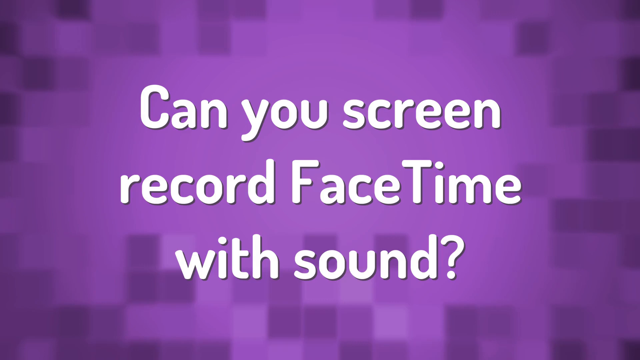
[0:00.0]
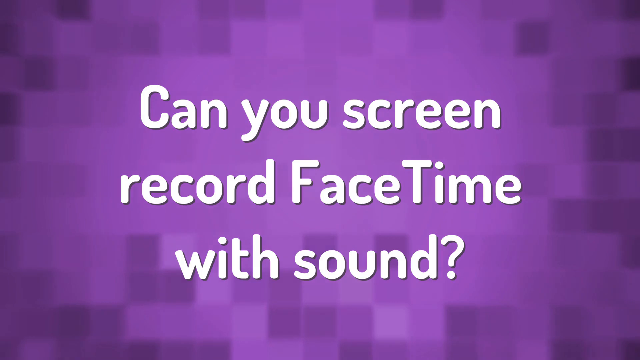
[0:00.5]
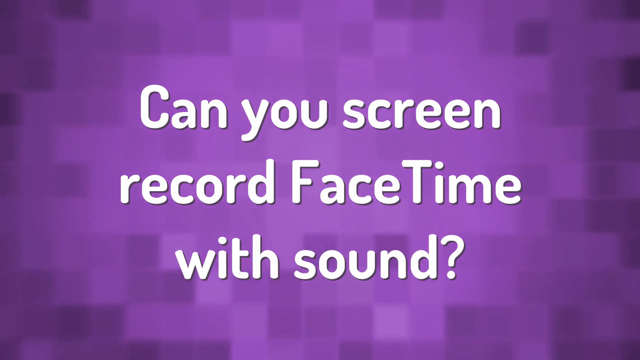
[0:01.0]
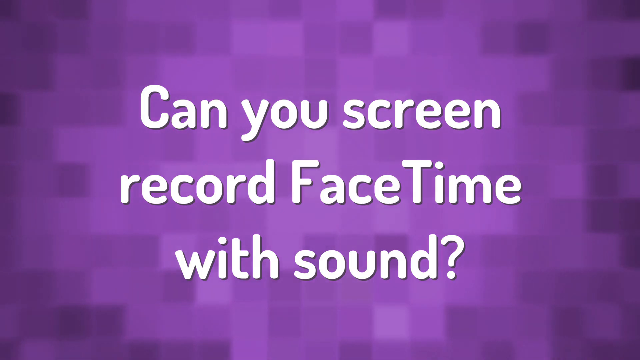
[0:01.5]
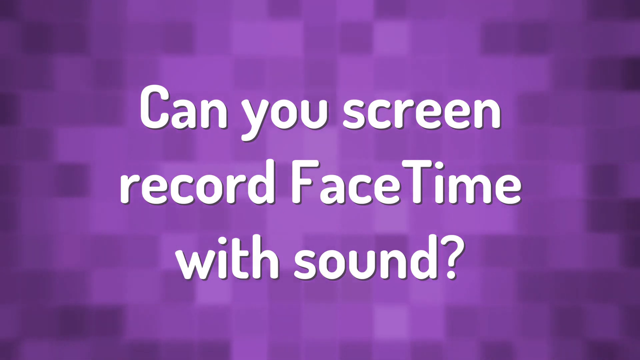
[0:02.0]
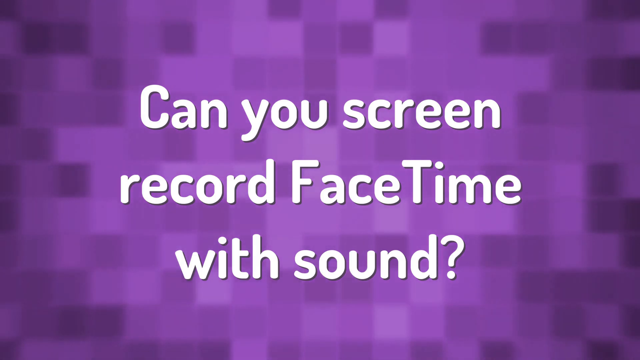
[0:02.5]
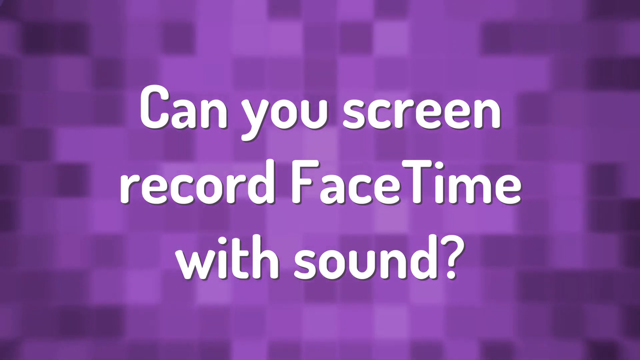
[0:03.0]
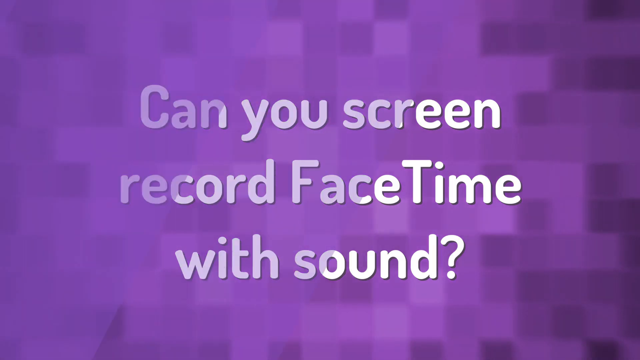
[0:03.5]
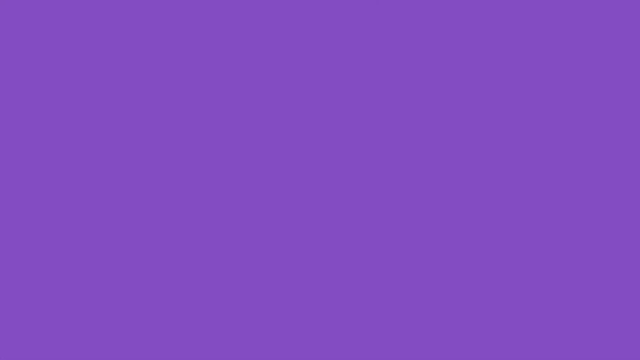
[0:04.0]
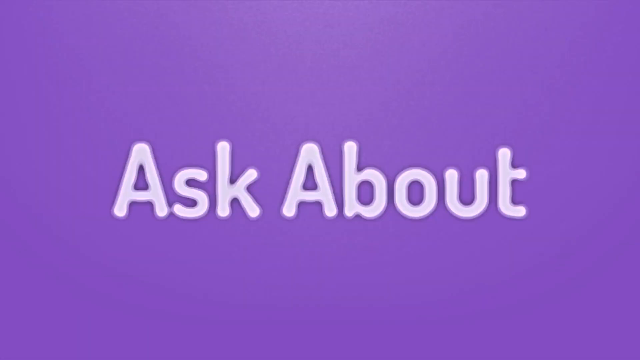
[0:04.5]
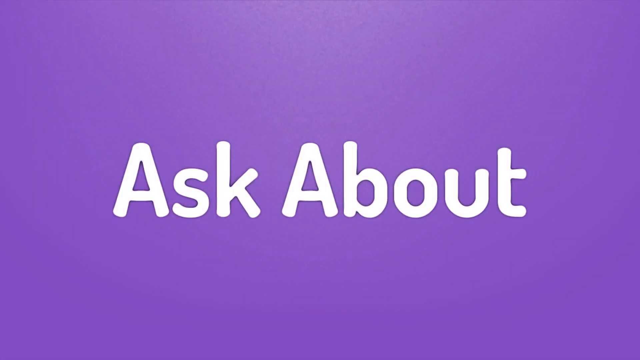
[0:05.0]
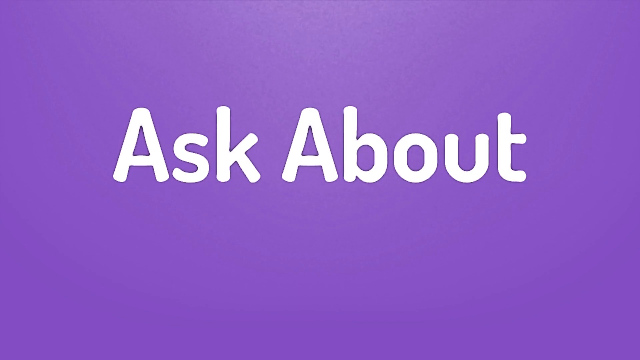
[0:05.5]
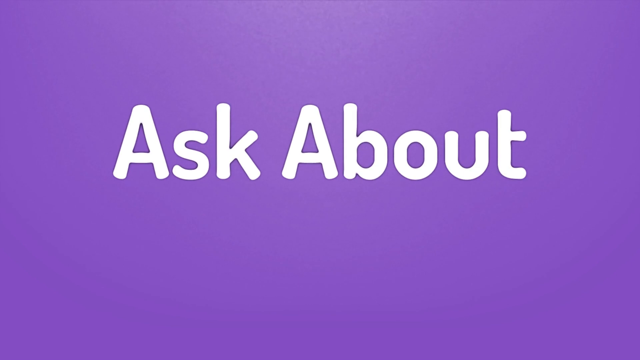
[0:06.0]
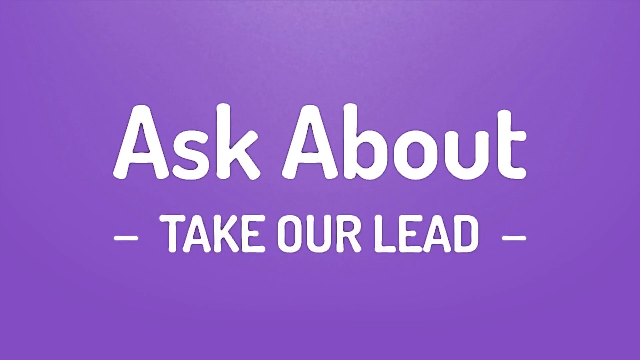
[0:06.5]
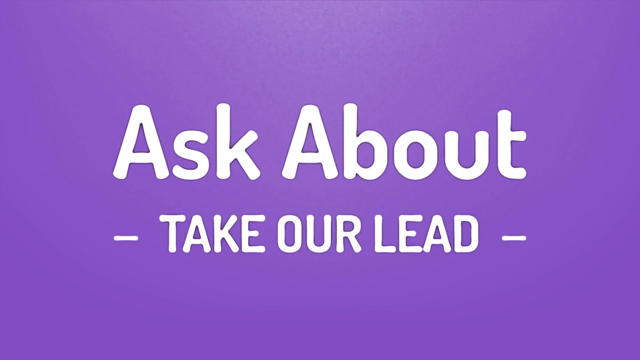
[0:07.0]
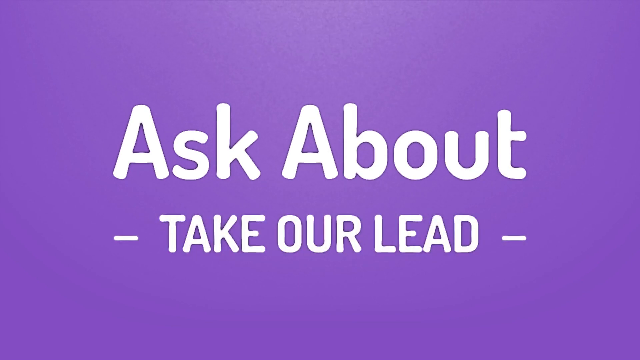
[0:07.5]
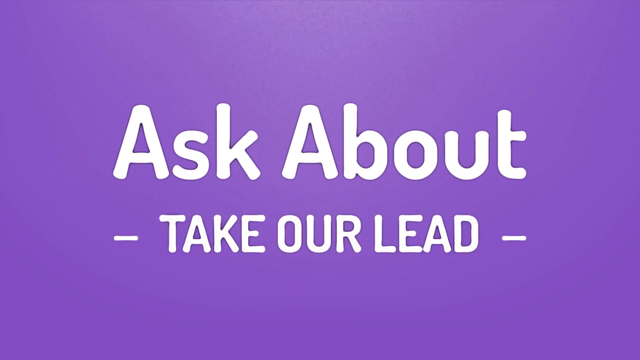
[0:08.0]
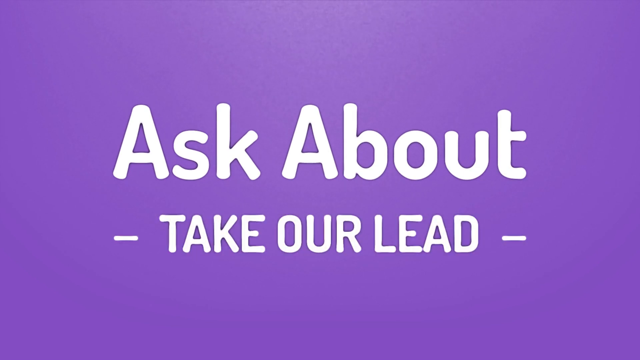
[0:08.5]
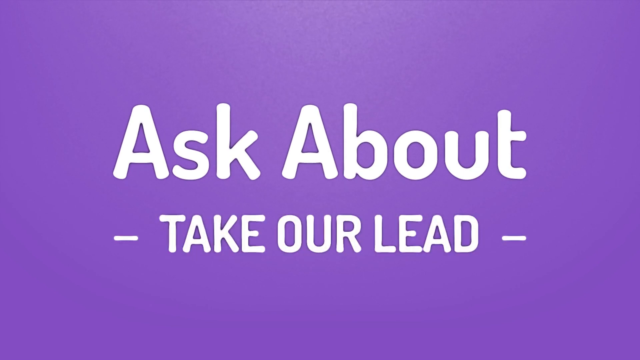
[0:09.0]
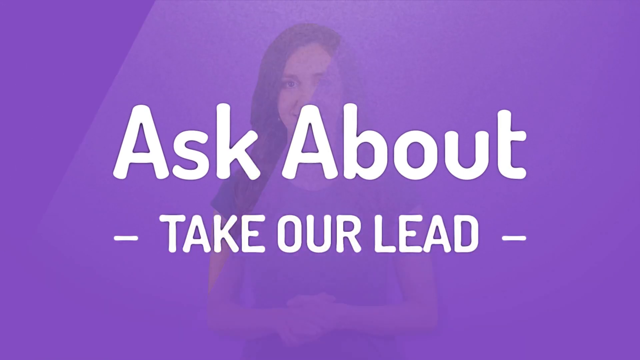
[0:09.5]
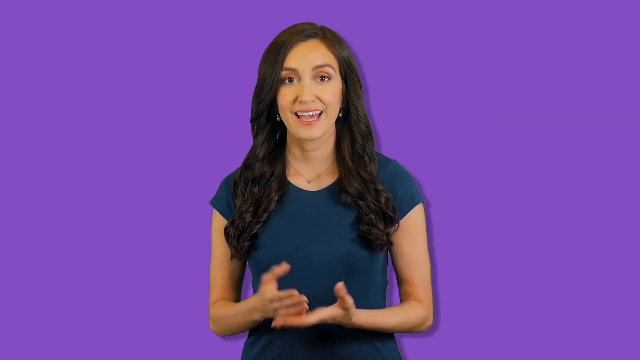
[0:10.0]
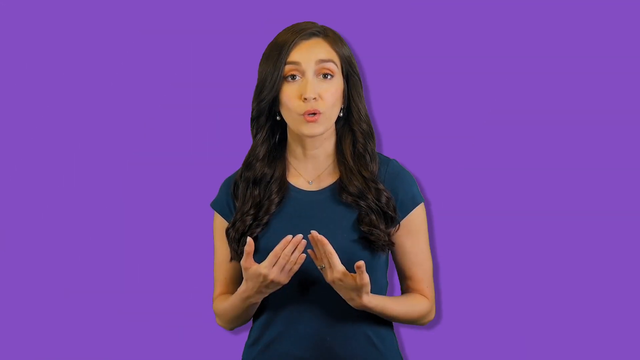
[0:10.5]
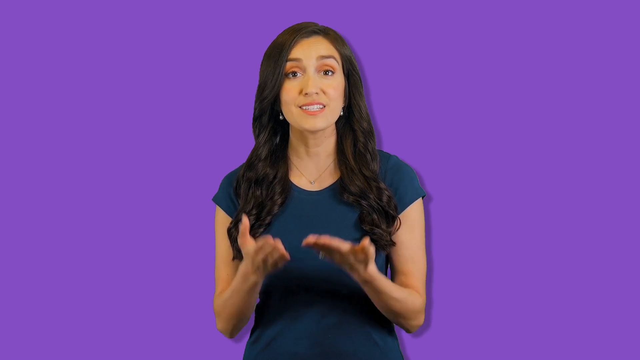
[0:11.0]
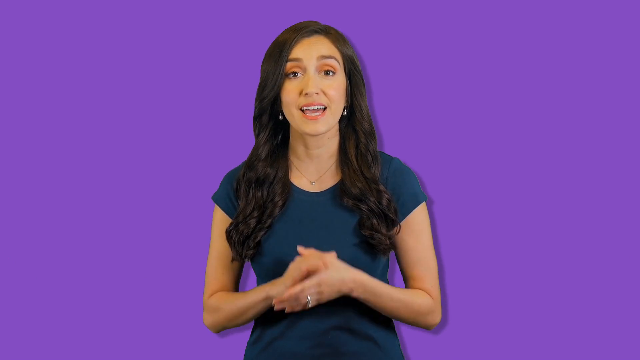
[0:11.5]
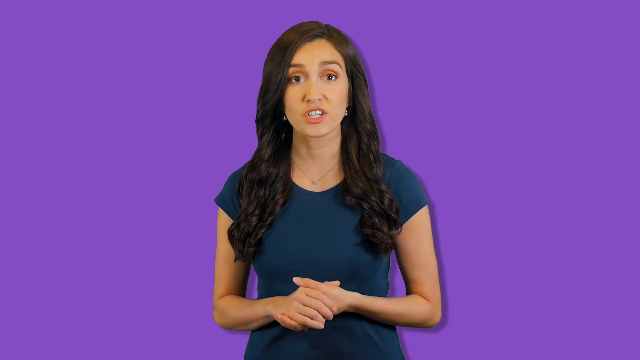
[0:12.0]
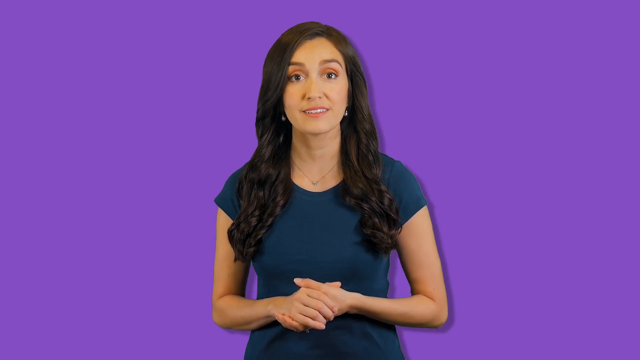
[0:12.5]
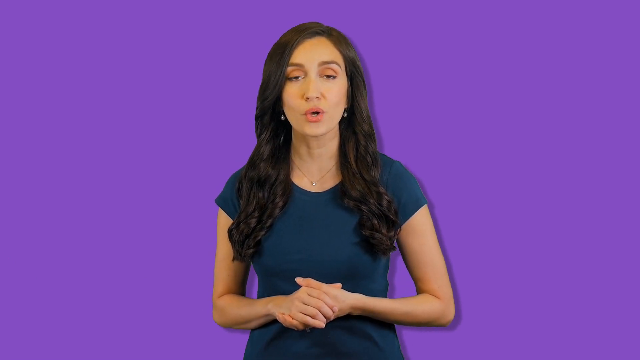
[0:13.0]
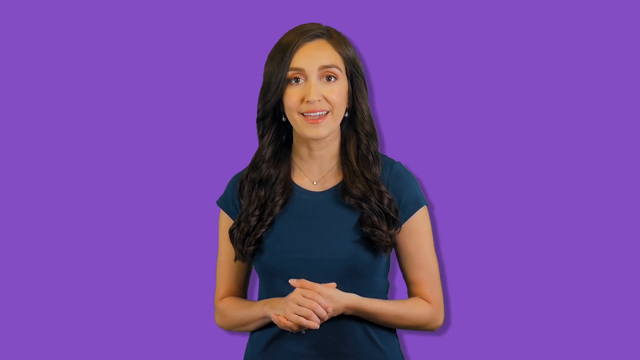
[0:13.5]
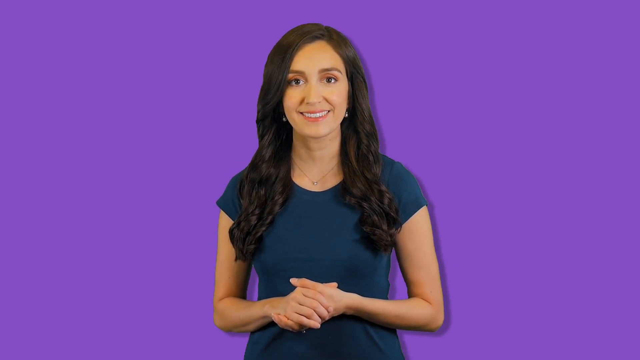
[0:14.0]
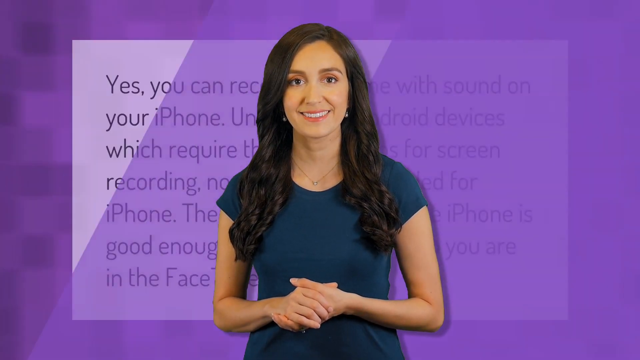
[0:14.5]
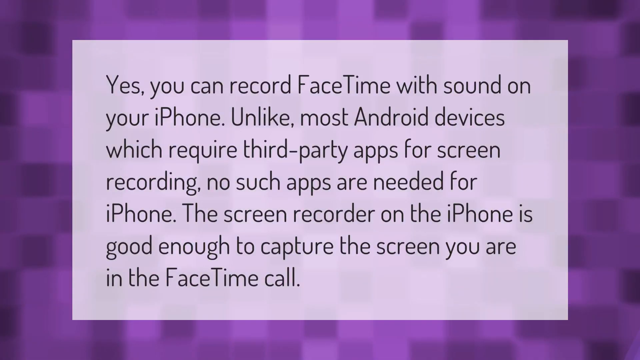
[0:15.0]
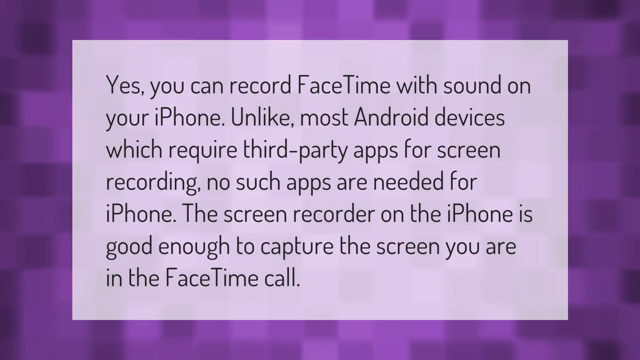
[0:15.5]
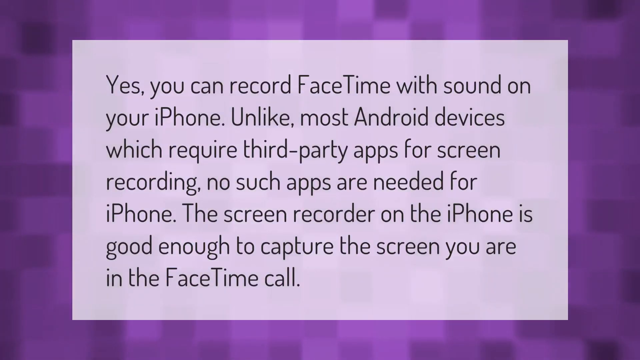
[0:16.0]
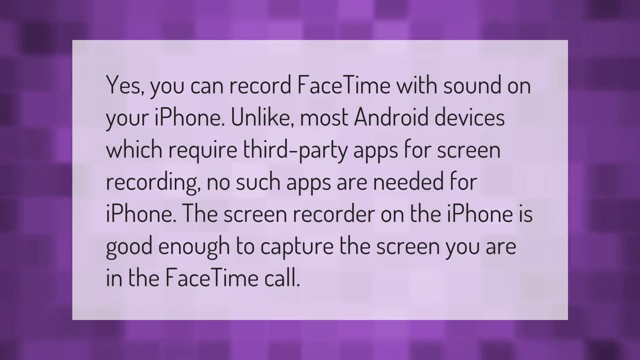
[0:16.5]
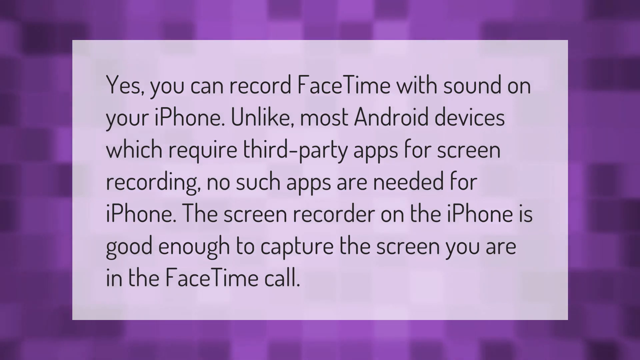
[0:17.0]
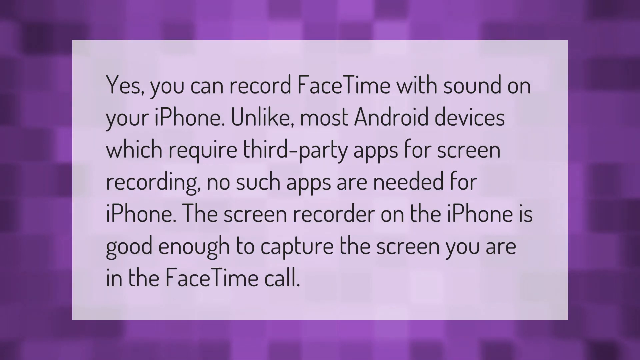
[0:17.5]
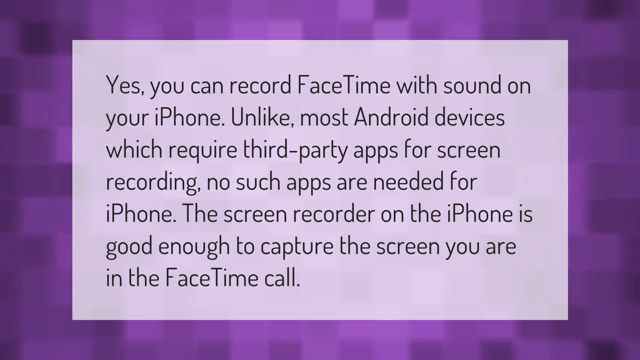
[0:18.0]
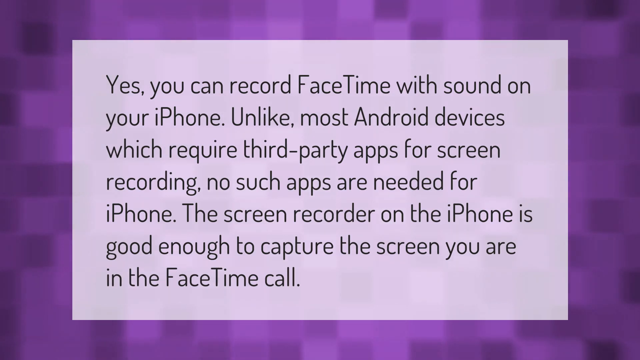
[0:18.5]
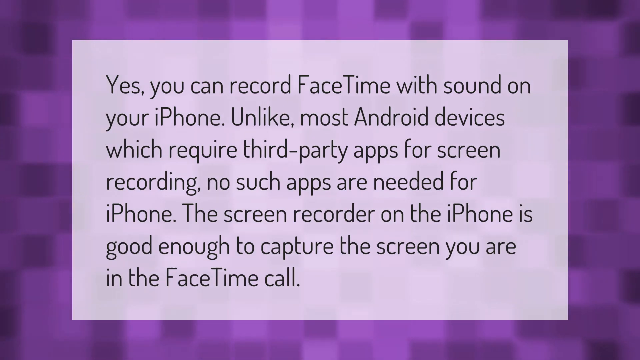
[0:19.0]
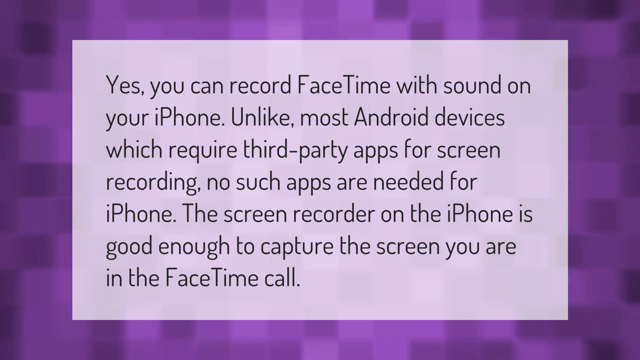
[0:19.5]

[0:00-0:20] The video opens on a pixelated, lavender-colored background with white text that reads "Can you screen record FaceTime with sound?" The pixels move. It then transitions to another lavender screen with white text reading "Ask About. Take our lead. Ask about TakeOurLead." Next comes another lavender background with an image of a woman. Her dark brown hair reaches her chest, and she wears earrings, light makeup, a small gold chain, a teal short-sleeved pullover shirt and a wedding band. She is talking, using hand gestures, head movements and smiling eyes. The video returns to the pixelated lavender background, now with a lighter lavender box over it containing black text: "Yes, you can record FaceTime with sound on your iPhone, unlike most Android devices, which require third-party apps for screen recordings. No such apps are needed for iPhone. The screen recorder on the iPhone is good enough to capture the screen you are in the FaceTime call."